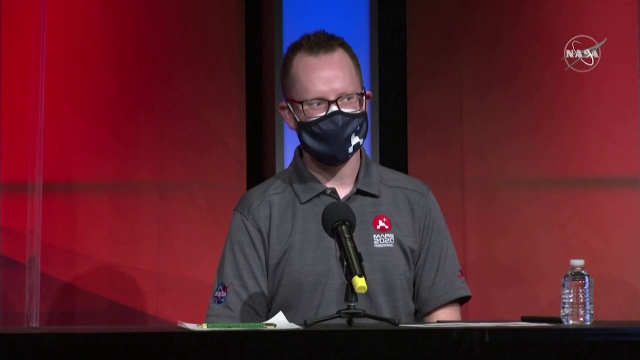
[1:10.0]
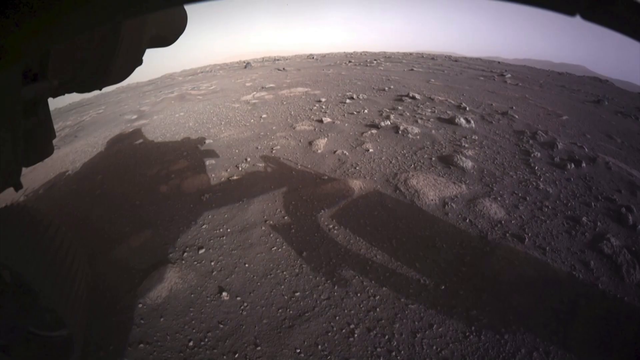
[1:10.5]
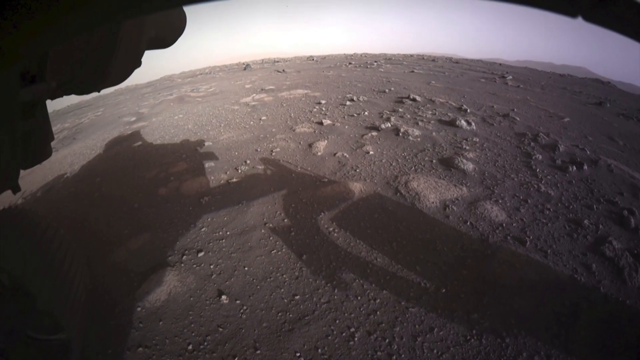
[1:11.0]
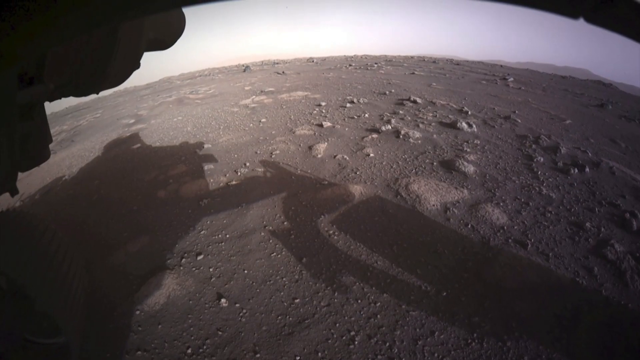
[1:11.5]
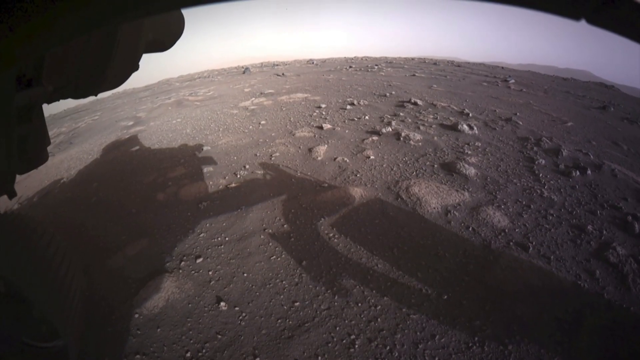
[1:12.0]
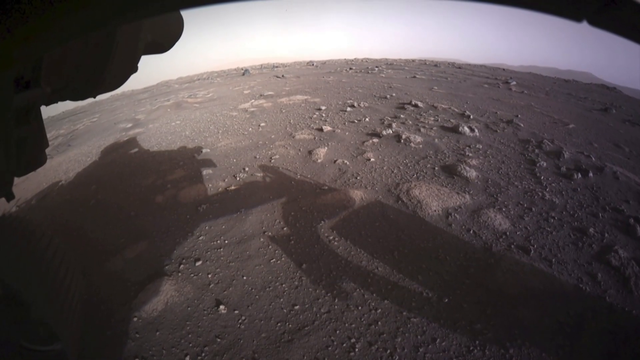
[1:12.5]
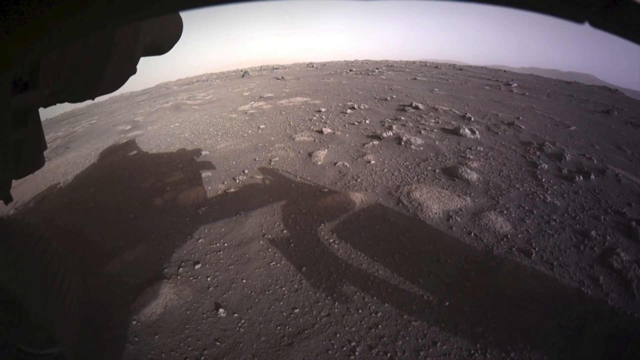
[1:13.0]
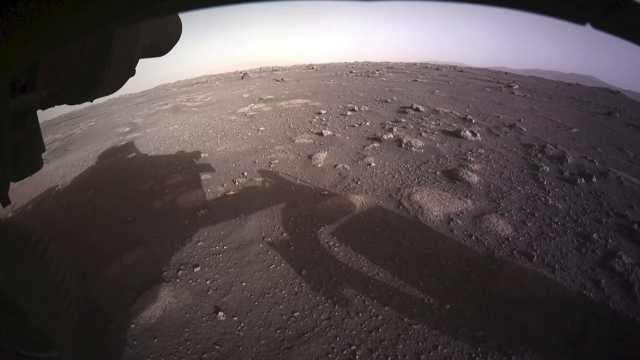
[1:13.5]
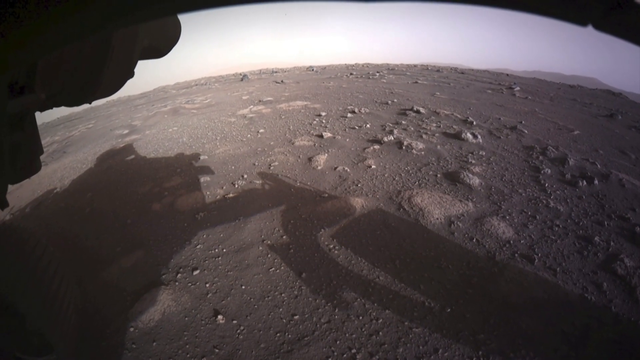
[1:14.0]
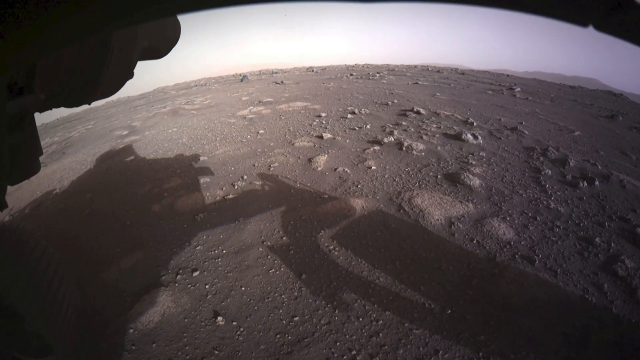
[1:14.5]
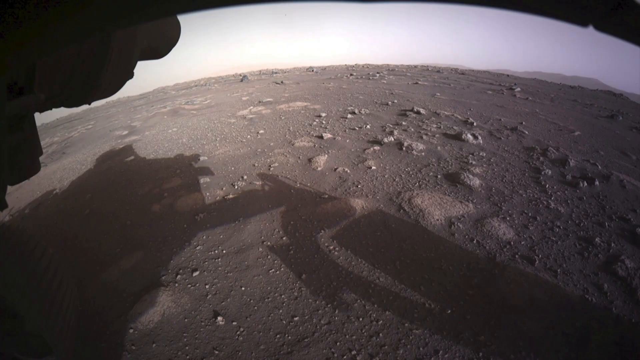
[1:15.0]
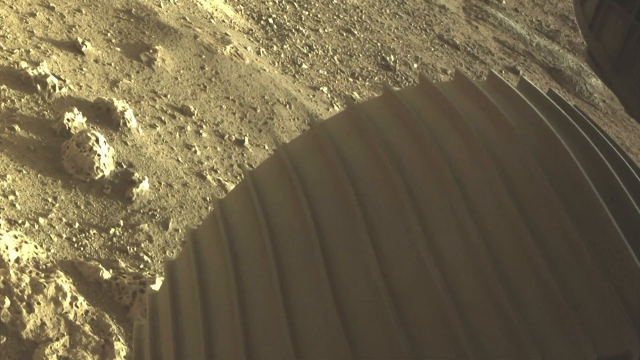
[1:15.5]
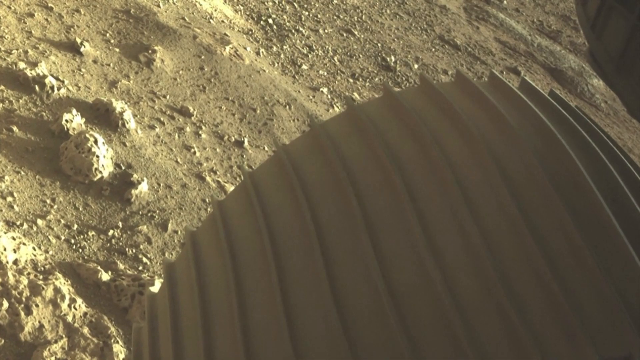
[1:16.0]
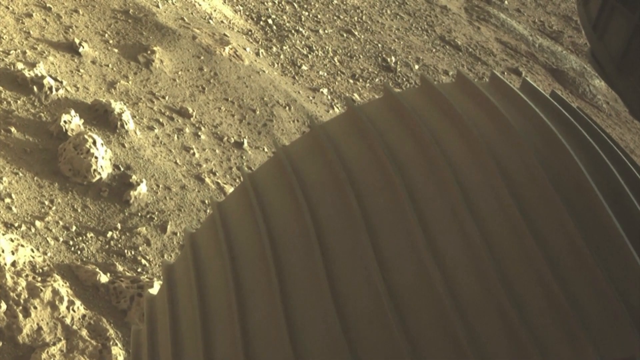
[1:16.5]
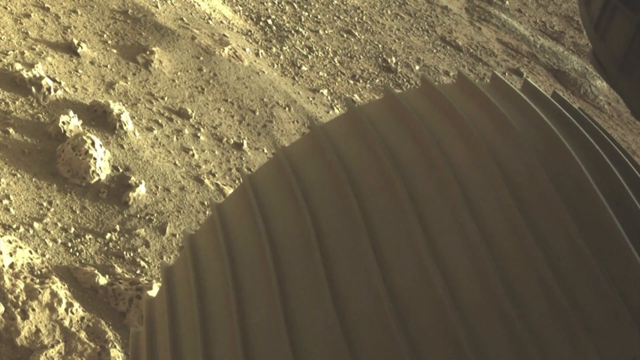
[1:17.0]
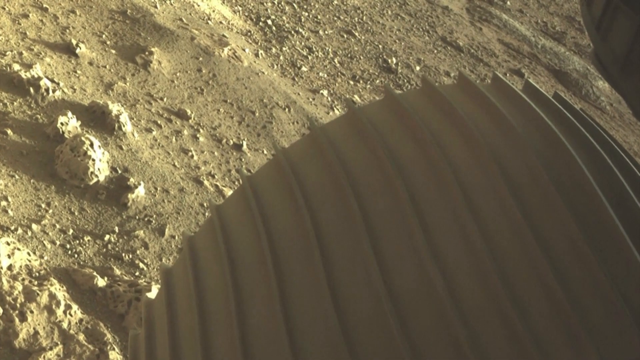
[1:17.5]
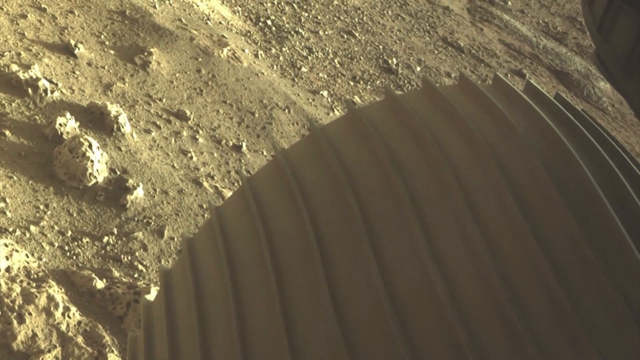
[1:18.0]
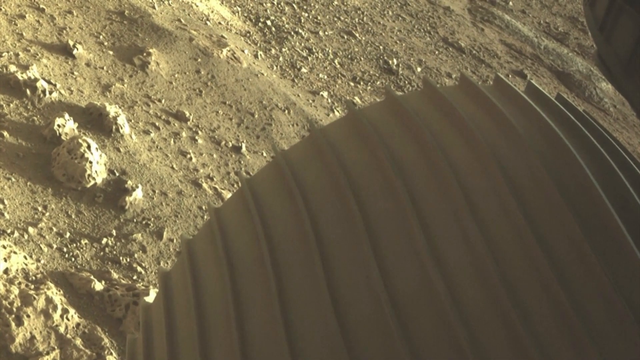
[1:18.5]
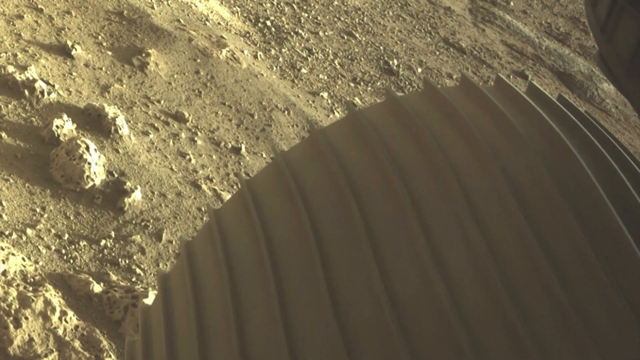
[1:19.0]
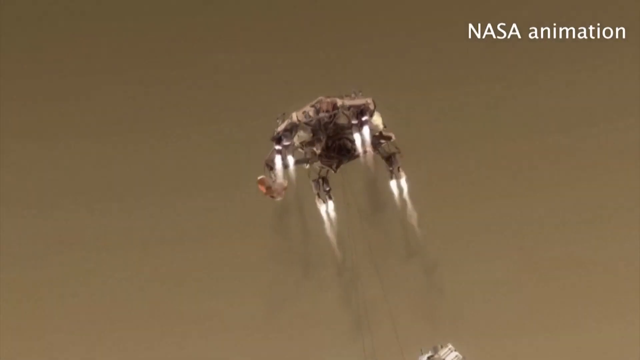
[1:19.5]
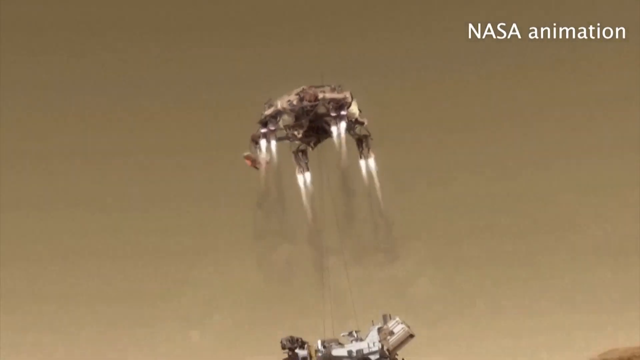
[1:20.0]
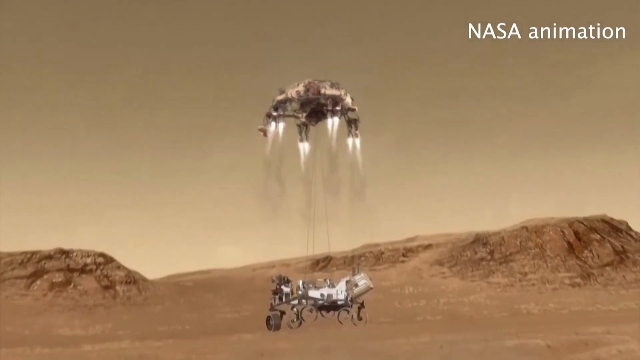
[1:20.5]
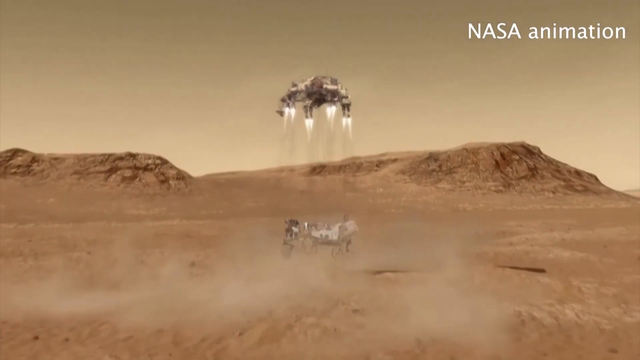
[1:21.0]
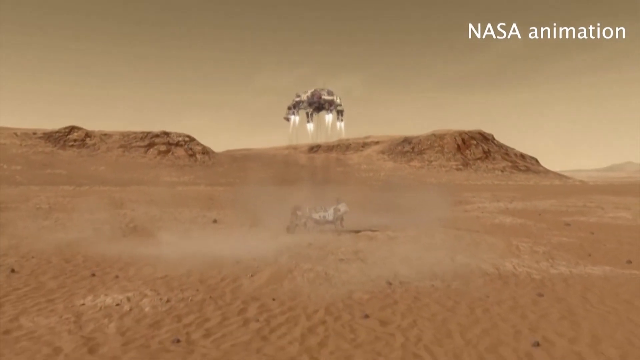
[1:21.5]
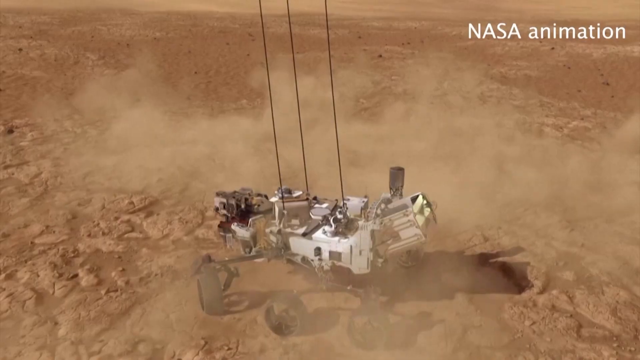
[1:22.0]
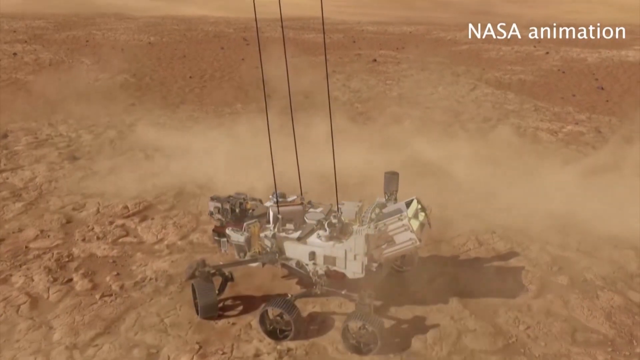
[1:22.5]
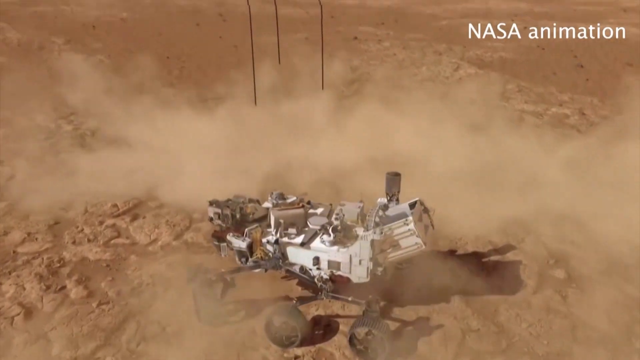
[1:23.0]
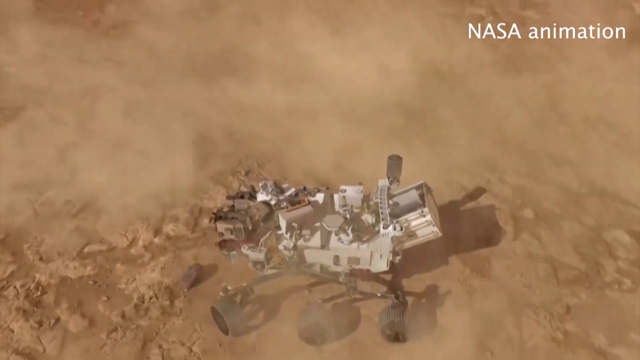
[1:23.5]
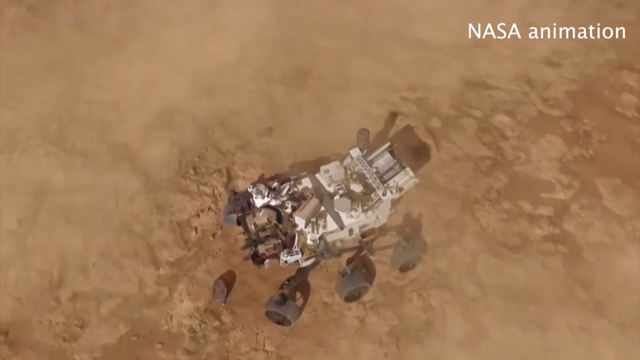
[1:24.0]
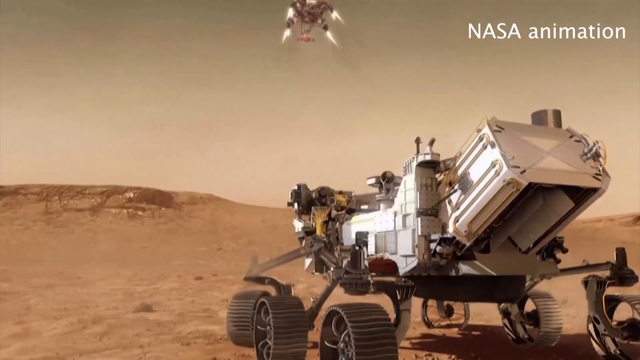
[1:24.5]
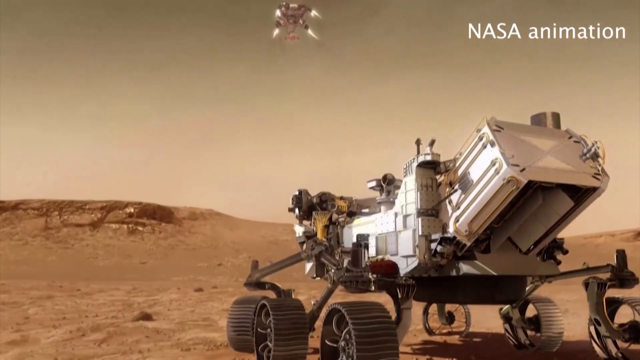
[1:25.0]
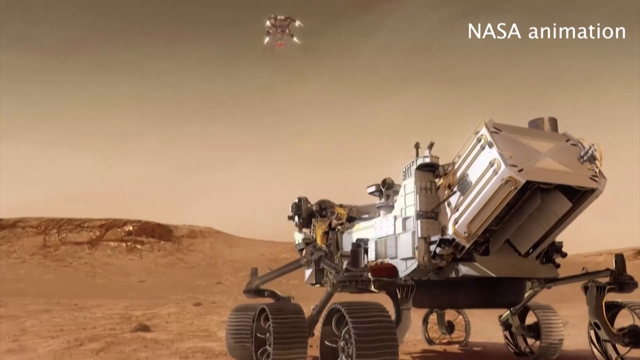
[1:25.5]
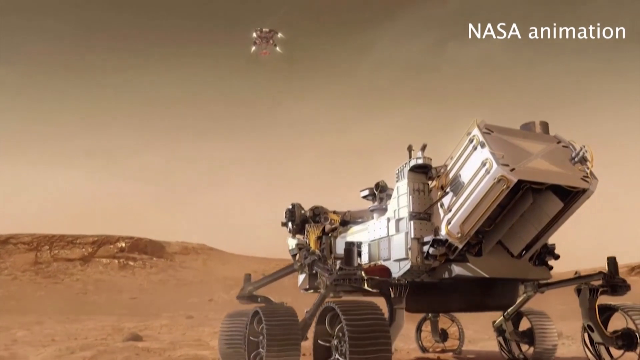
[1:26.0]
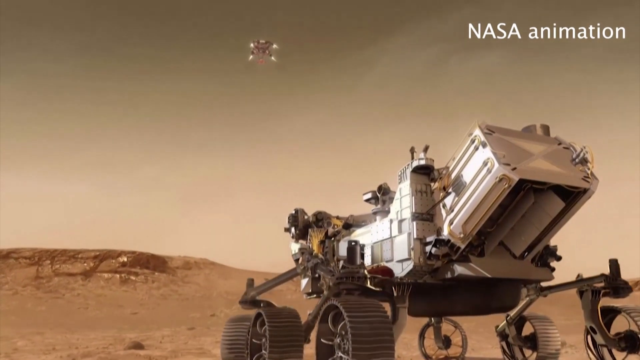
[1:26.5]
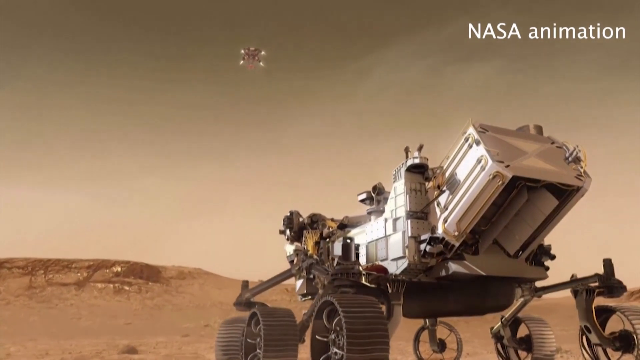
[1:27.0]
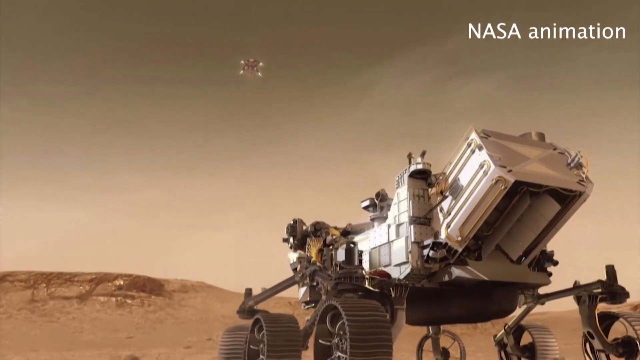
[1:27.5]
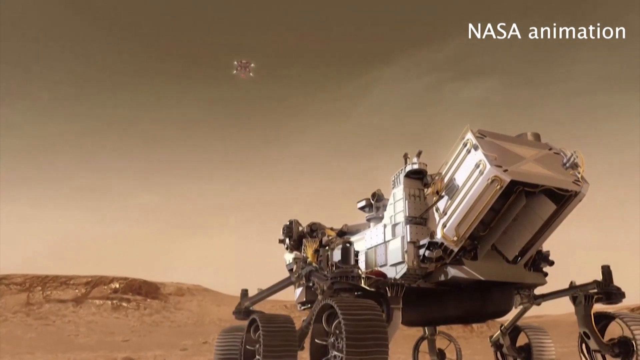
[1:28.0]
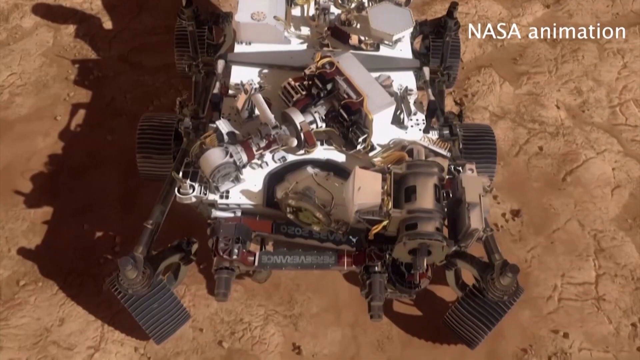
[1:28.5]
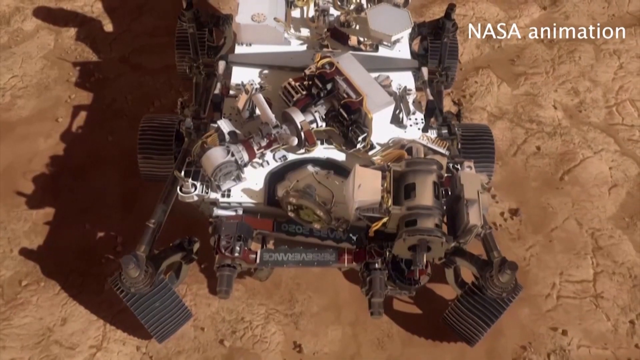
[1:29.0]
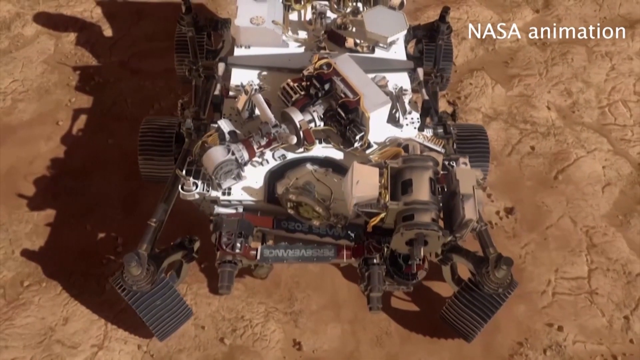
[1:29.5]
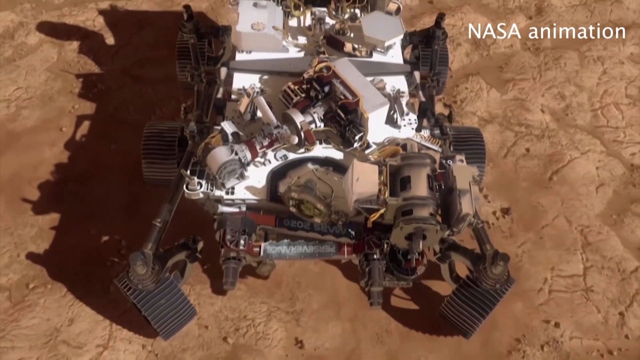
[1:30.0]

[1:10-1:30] The man continues answering questions in the interview or press conference. Behind him are red walls and a little bit of blue and black border. He wears a grayish green shirt with a red logo and some white writing underneath it, glasses, and two masks, a white mask underneath a black one, and he has short hair. Bottled water is on the table. Footage, possibly actual or possibly computer-generated, shows the surface of the moon or Mars as the parachute or object comes into focus, then switches to a closer view of the surface of the planet, where one of the rover's wheels and some rock are visible. A NASA animation then shows how the device landed and laid the rover down gently on the surface, after which the drone takes off and leaves the rover on the ground.